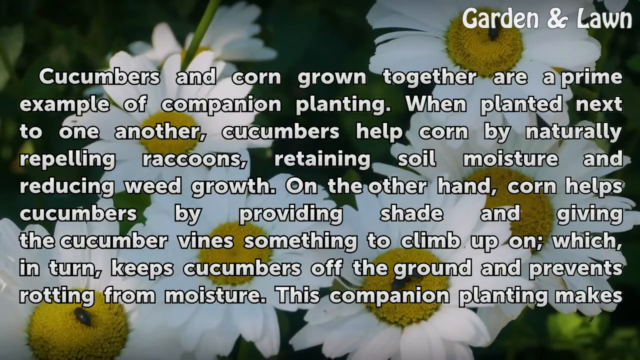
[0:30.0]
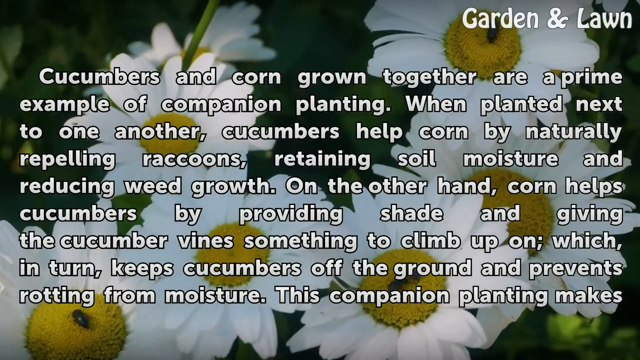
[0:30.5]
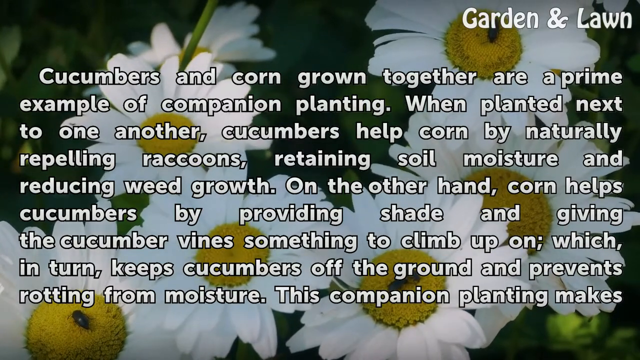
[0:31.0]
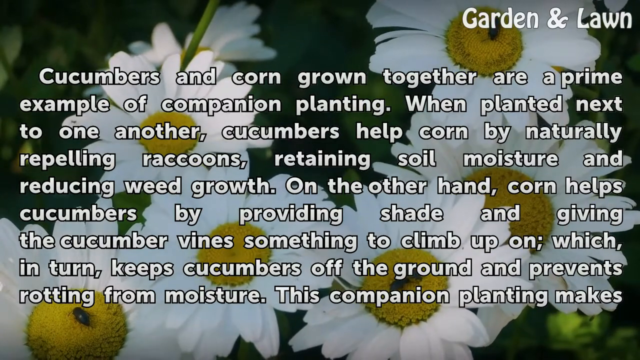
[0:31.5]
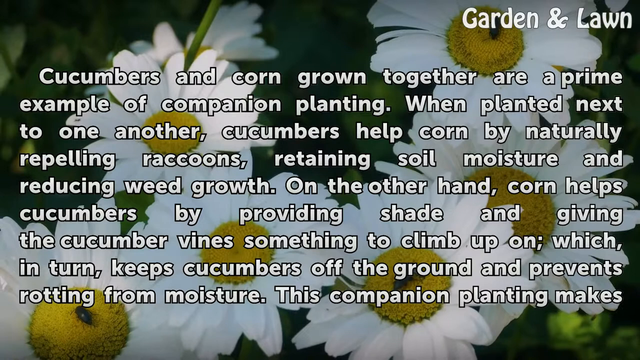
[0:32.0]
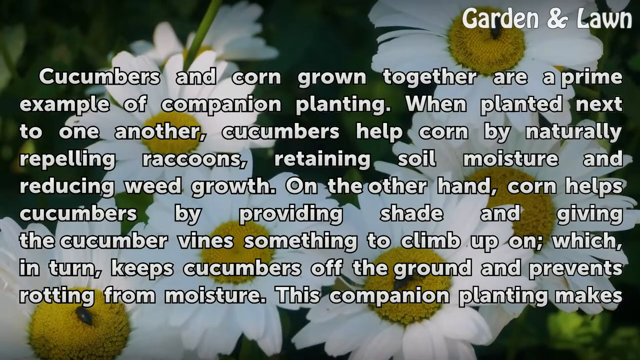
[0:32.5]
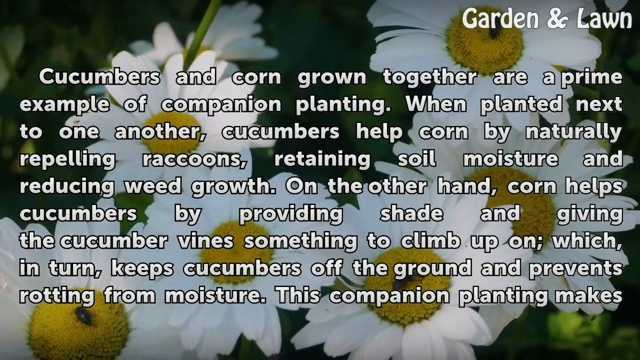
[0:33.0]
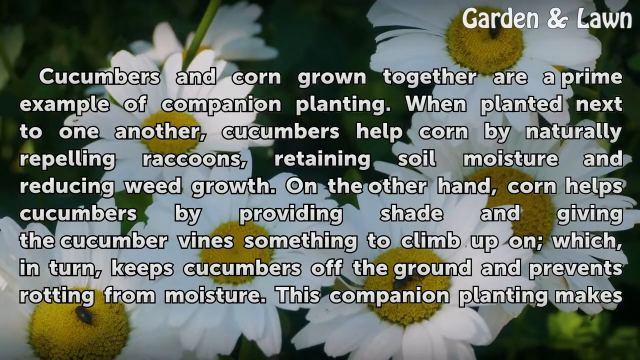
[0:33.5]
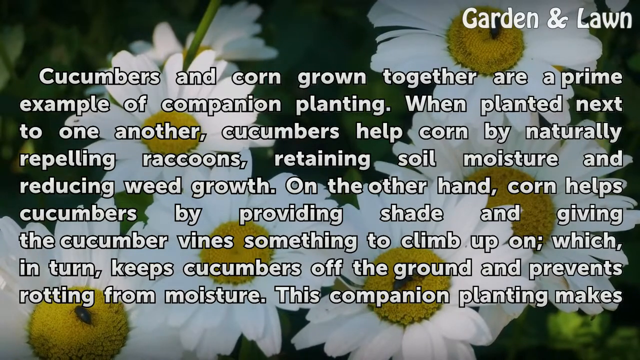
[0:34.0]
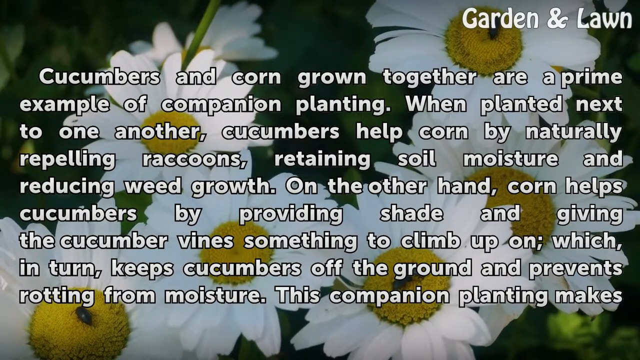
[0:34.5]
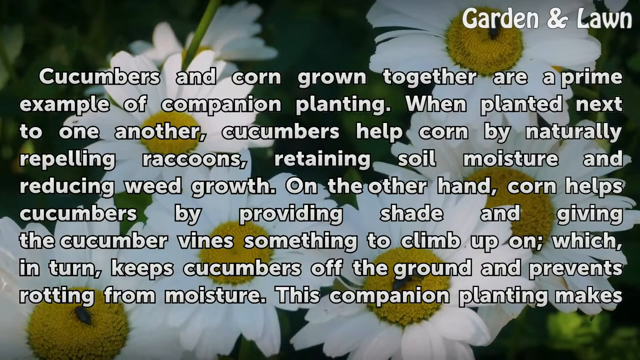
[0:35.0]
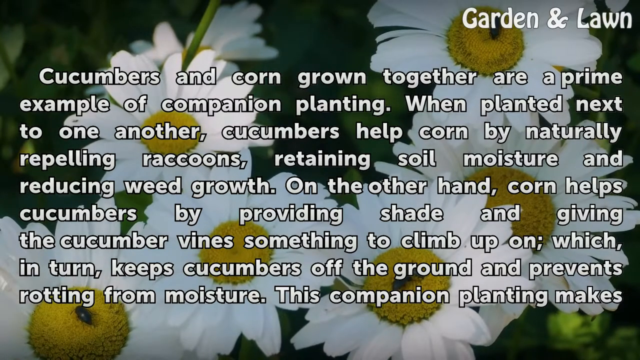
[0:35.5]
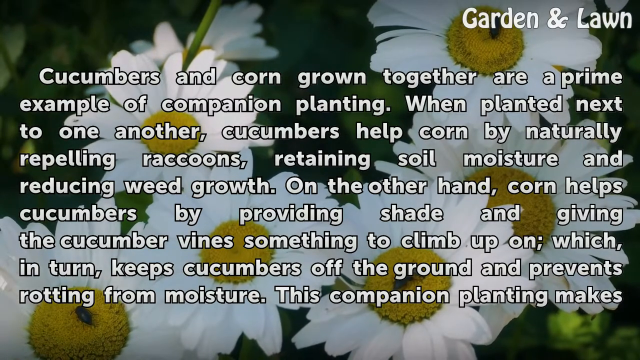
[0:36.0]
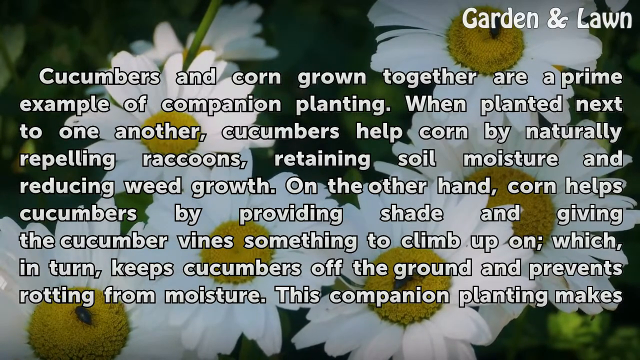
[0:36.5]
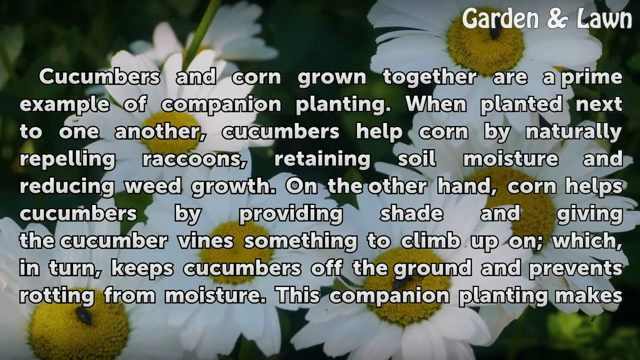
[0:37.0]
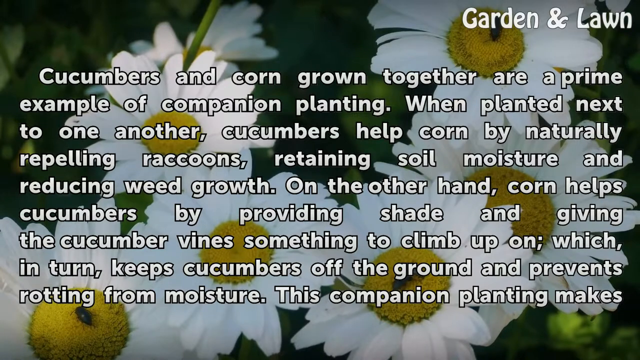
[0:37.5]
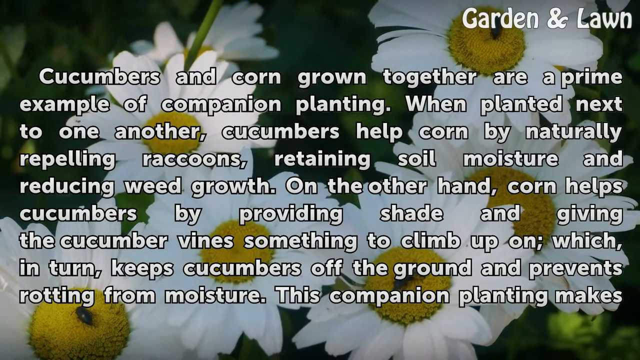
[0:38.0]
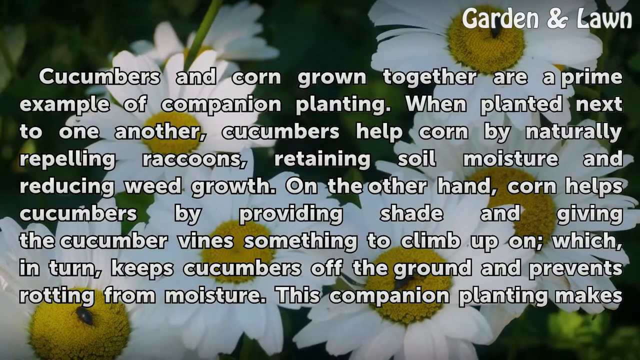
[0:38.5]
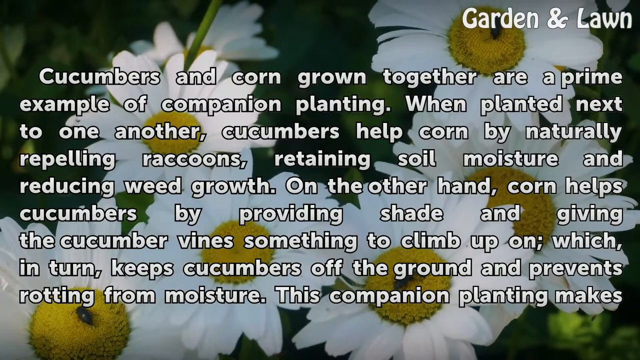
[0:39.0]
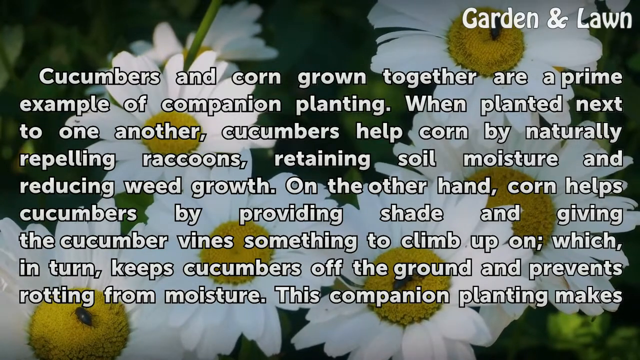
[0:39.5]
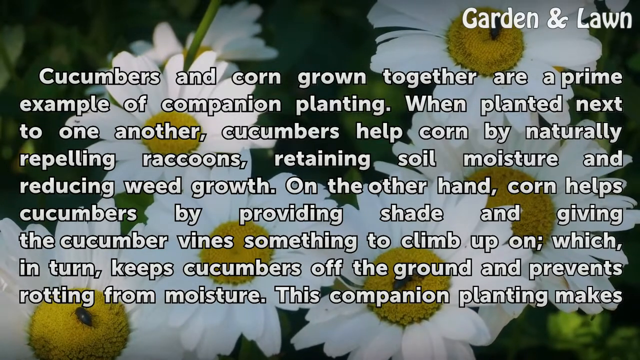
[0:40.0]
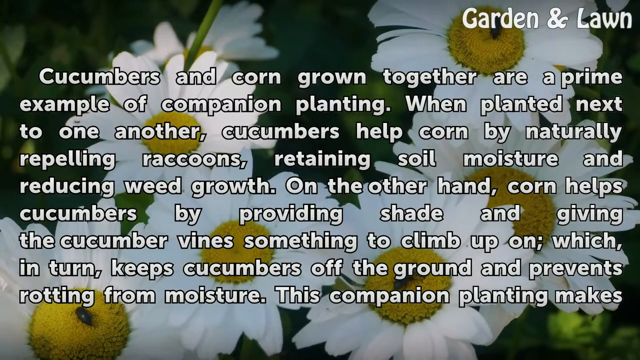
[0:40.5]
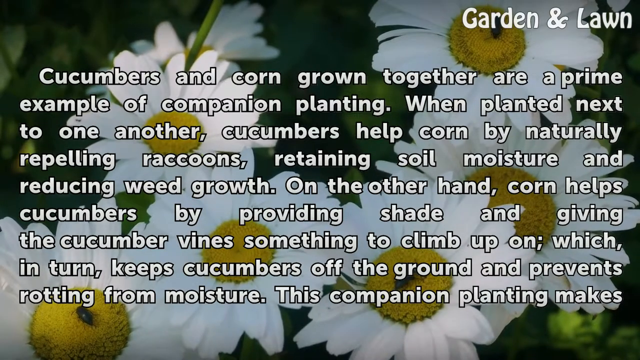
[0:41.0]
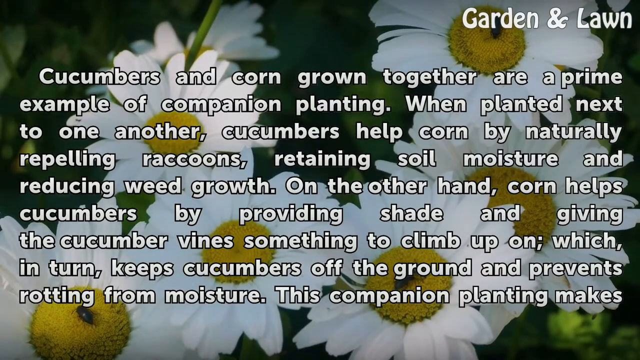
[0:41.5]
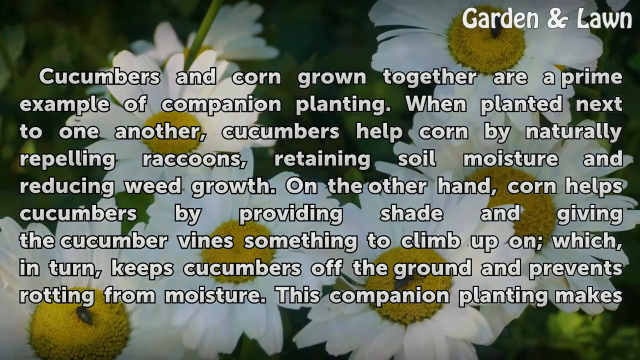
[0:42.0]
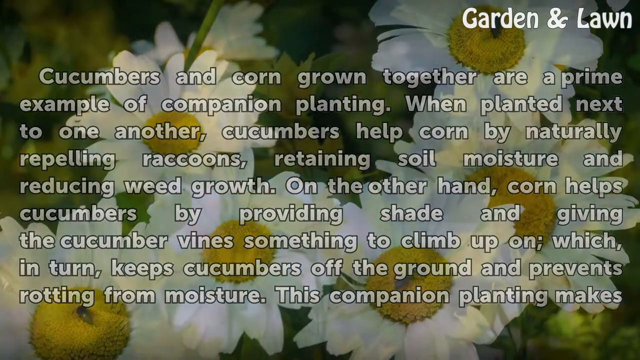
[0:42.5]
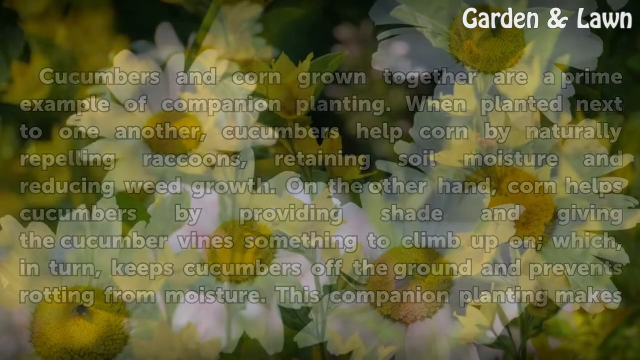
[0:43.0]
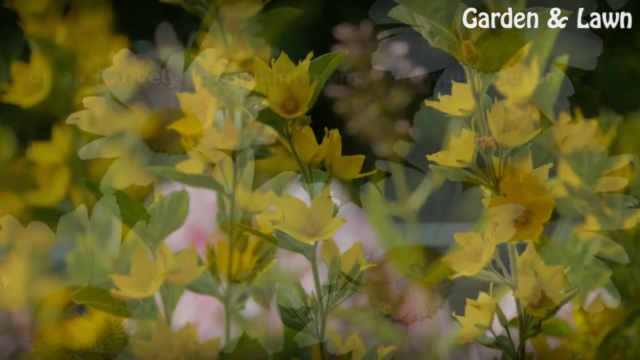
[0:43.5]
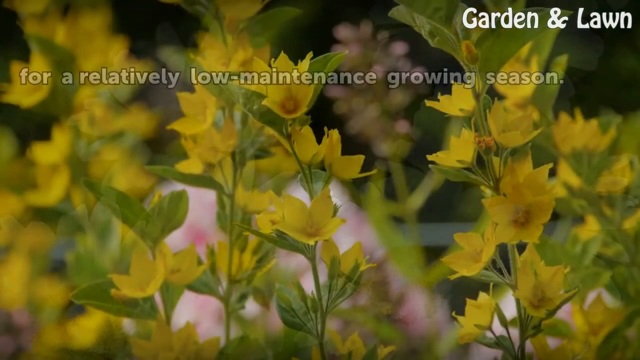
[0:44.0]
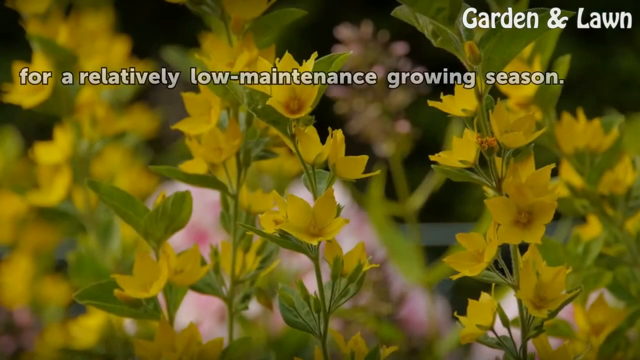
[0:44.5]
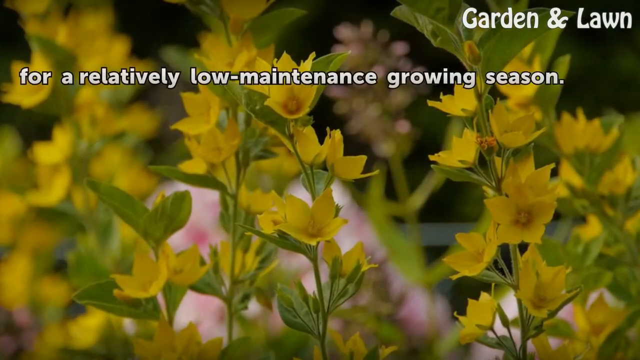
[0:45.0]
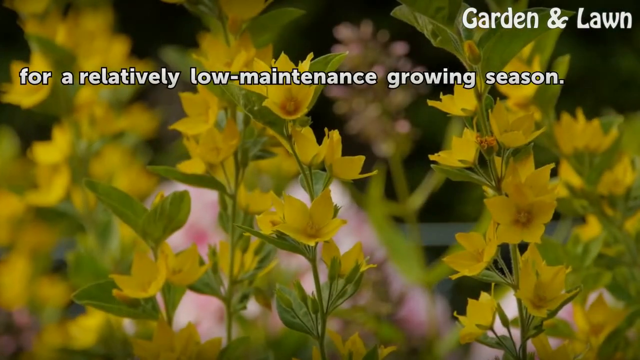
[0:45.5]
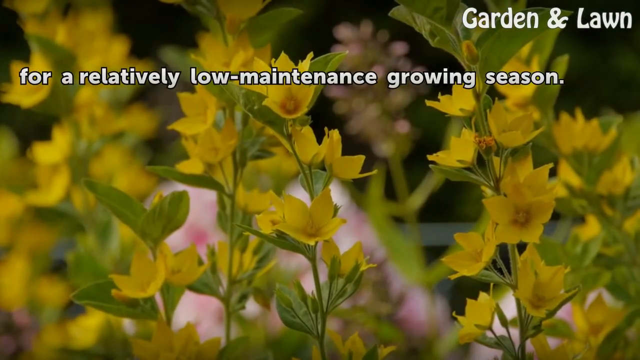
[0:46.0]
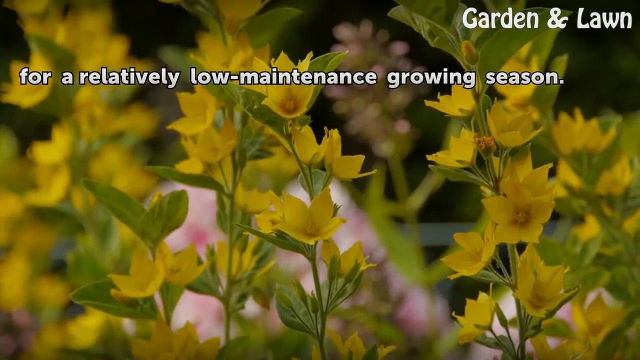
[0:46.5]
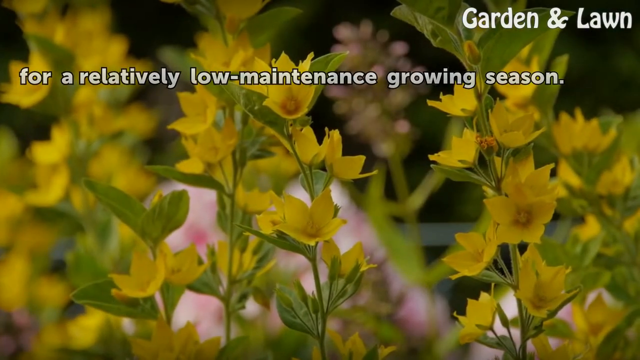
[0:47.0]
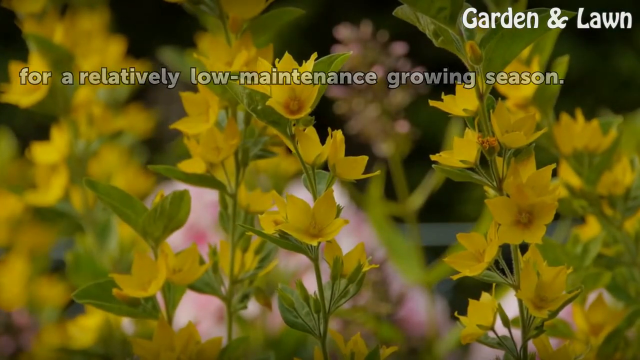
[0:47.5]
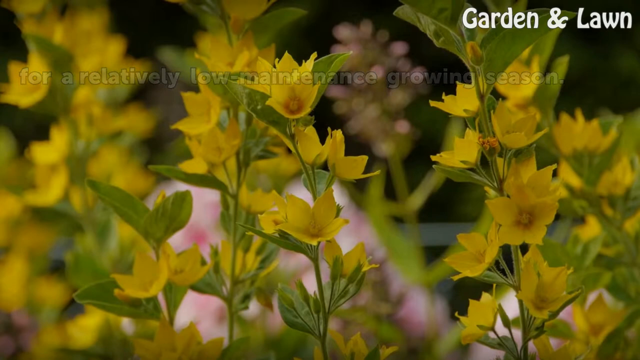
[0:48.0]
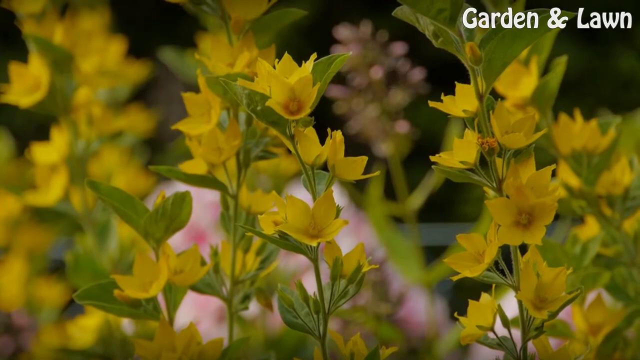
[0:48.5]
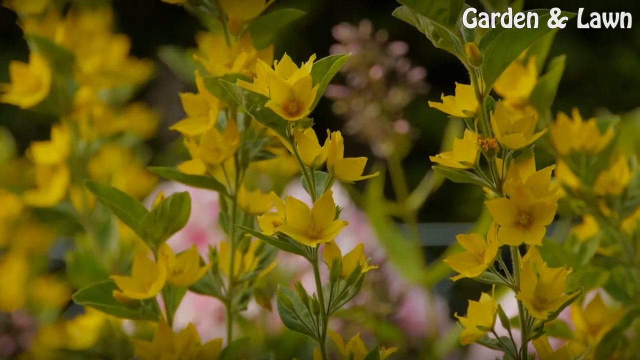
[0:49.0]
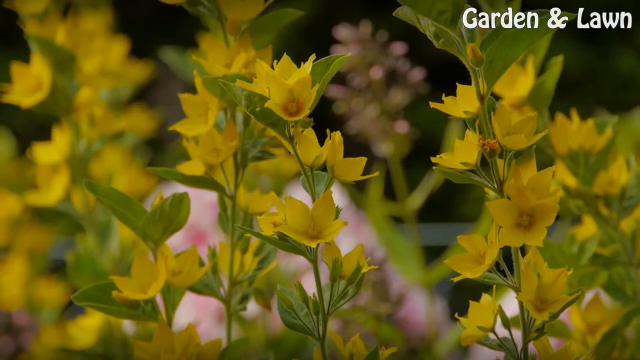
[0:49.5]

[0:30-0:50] A photo of a bunch of daisies fills the background, with the text "garden and lawn" in the upper right-hand corner throughout. In the center of the screen, a wall of white text with a black outline reads "Cucumbers and corn grown together are a prime example of companion planting. When planted next to one another, cucumbers help corn by naturally repelling raccoons, retaining soil moisture, and reducing weed growth. On the other hand, corn helps cucumbers by providing shade and giving the cucumber's vines something to climb up on, which, in turn, keeps cucumbers off the ground and prevents rotting from moisture. This companion plant makes"; the rest is cut off. The flowers in the background shift ever so slightly for a moment, and then the screen transitions to a photo of dotted loosestrife plants. Next, the text "for a relatively low-maintenance growing season" appears in white with a black outline. This text also fades out after a brief delay.